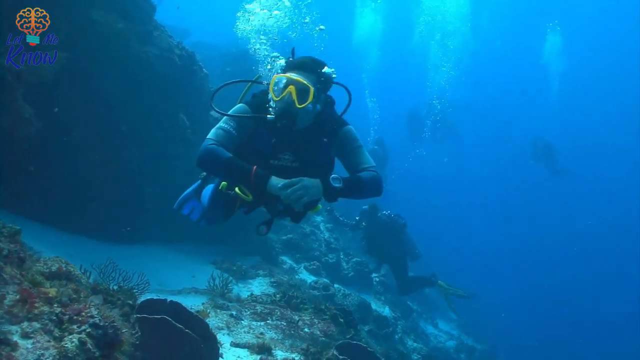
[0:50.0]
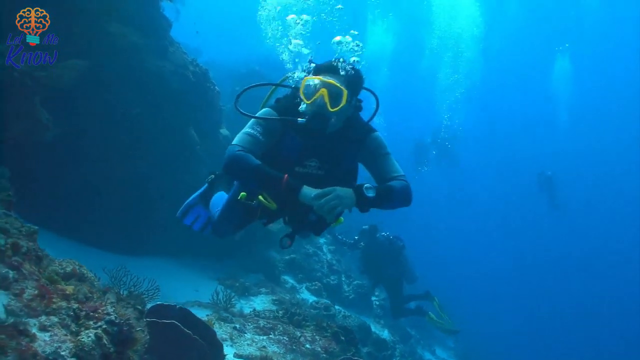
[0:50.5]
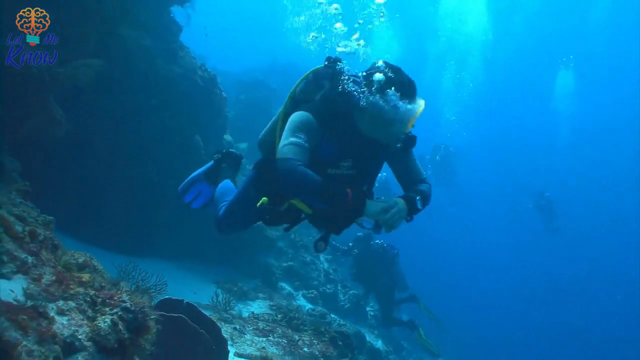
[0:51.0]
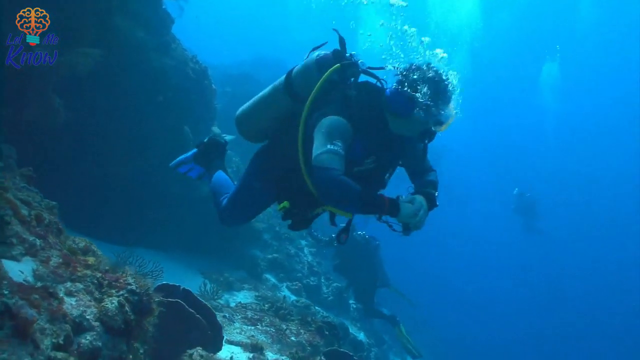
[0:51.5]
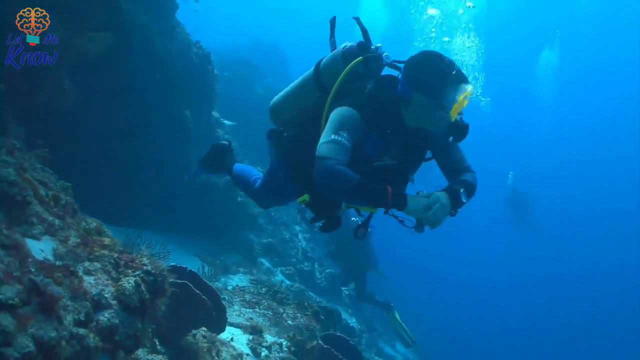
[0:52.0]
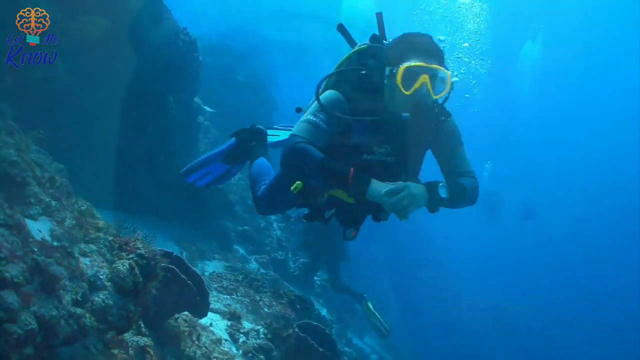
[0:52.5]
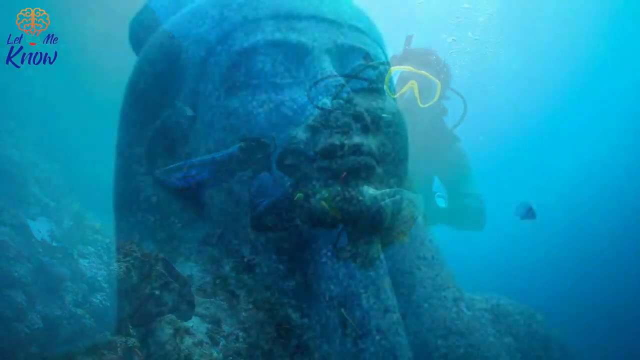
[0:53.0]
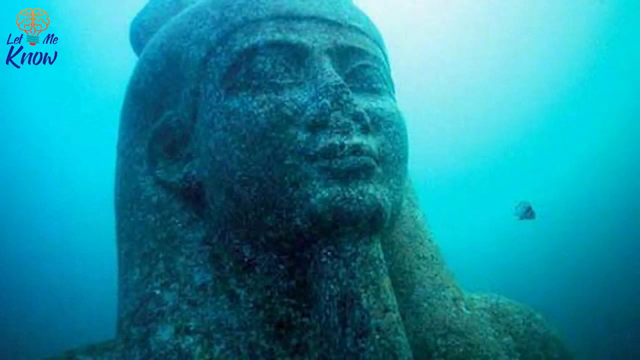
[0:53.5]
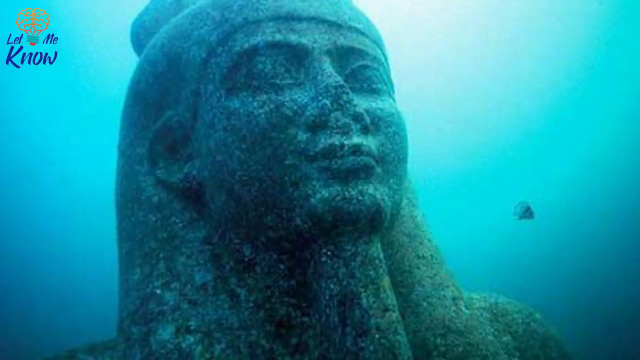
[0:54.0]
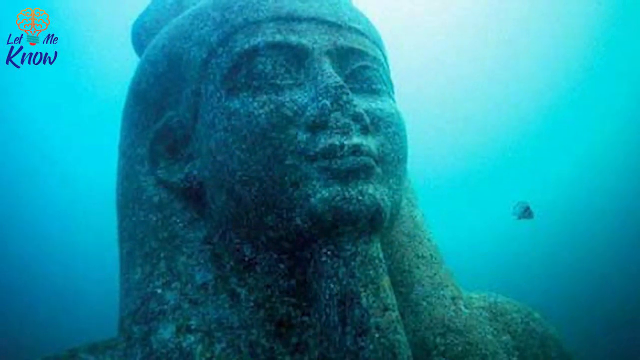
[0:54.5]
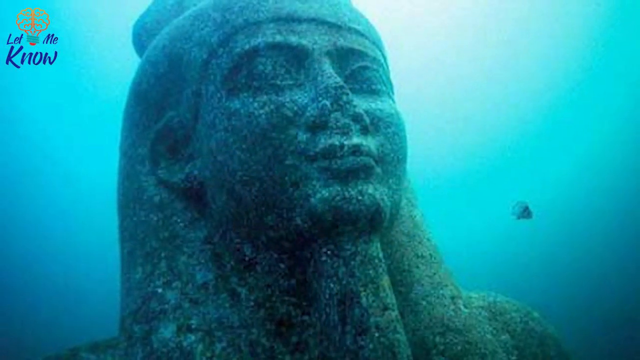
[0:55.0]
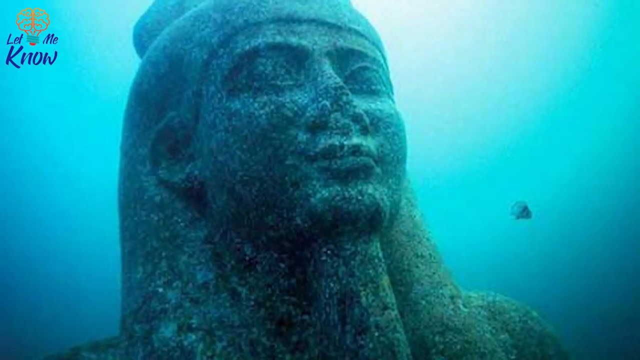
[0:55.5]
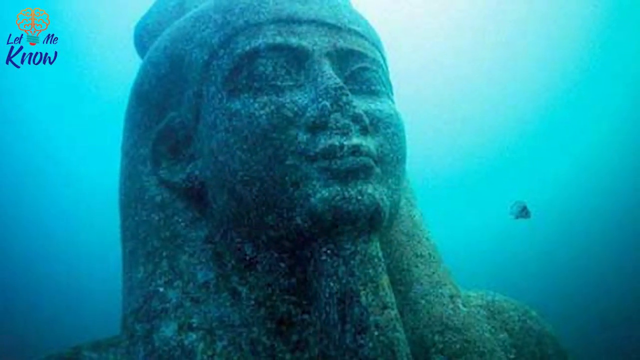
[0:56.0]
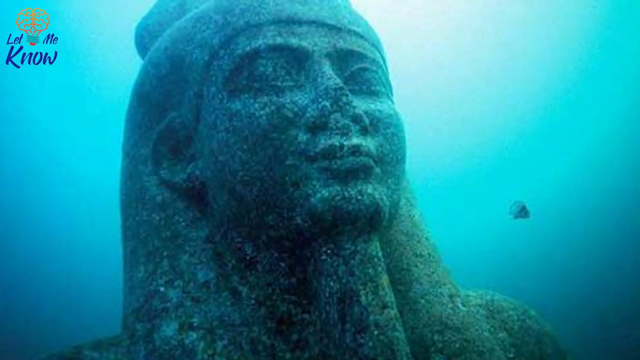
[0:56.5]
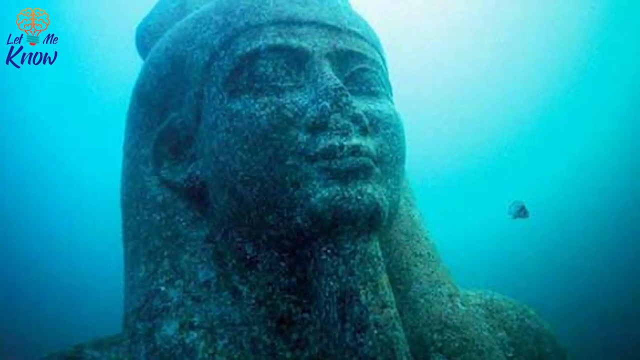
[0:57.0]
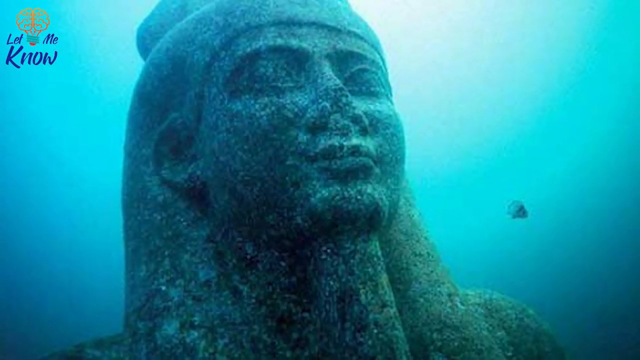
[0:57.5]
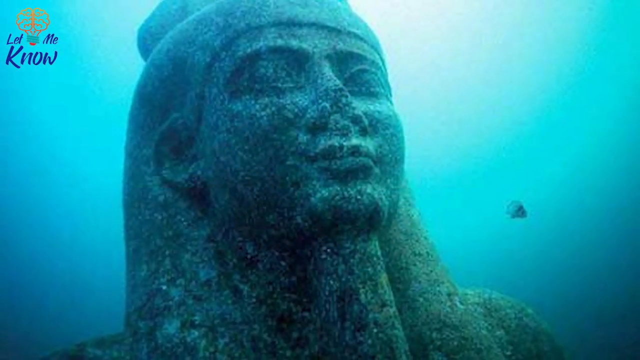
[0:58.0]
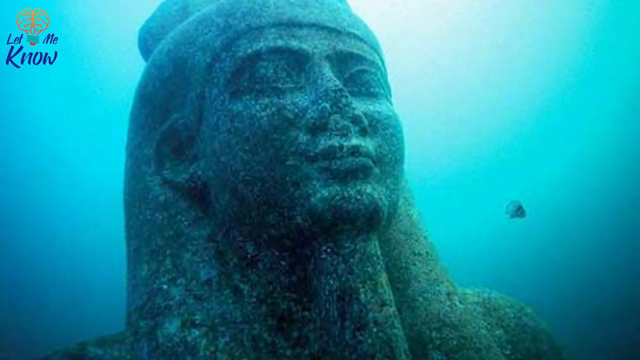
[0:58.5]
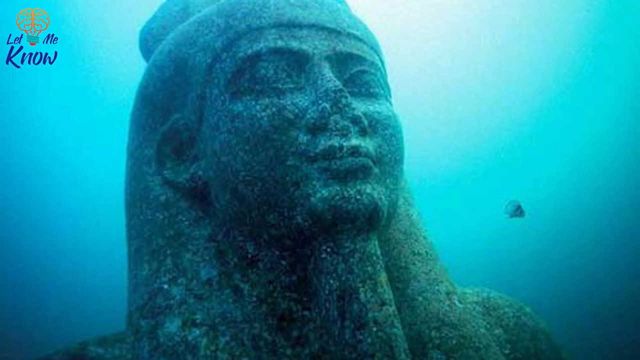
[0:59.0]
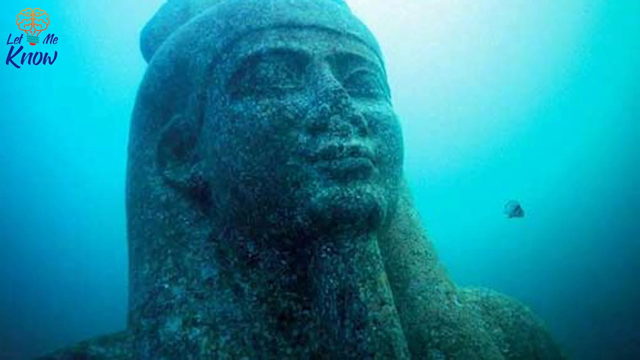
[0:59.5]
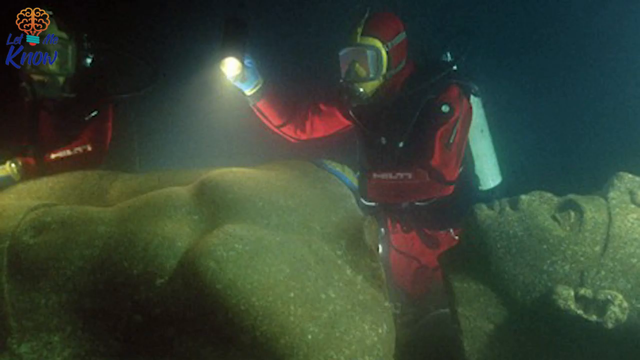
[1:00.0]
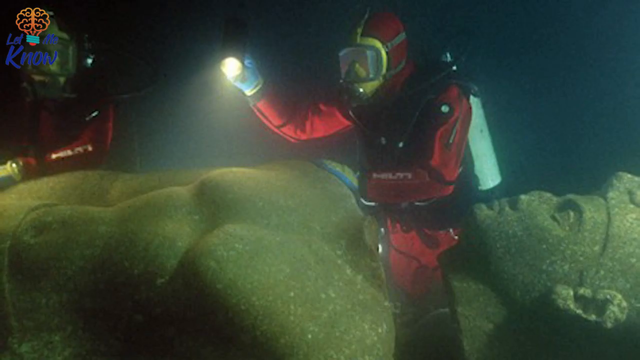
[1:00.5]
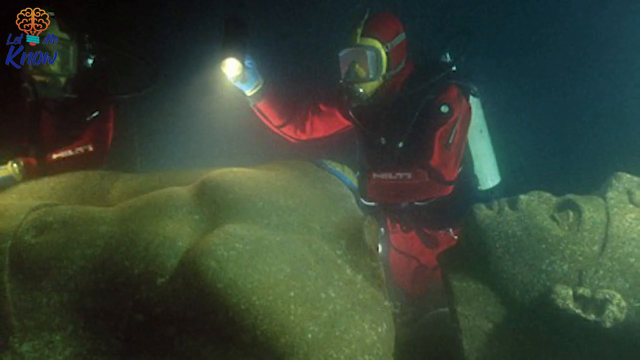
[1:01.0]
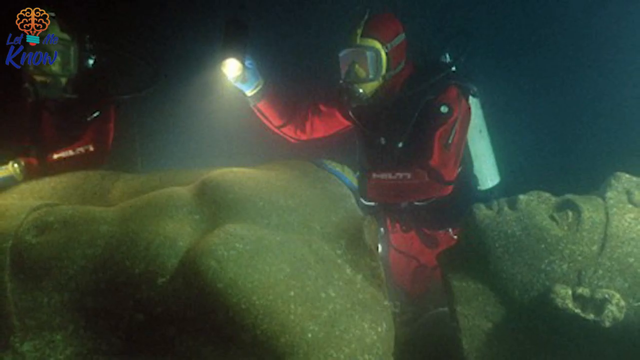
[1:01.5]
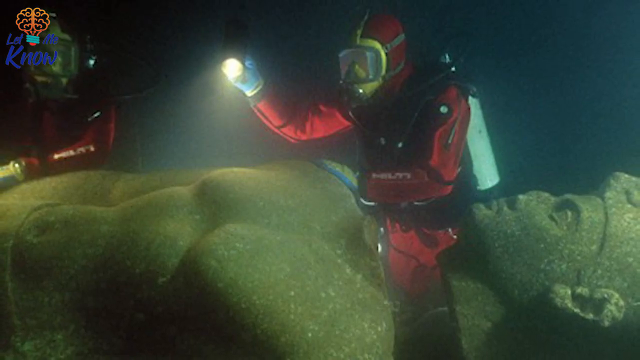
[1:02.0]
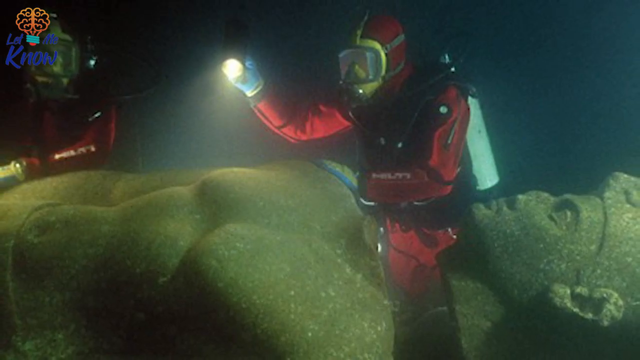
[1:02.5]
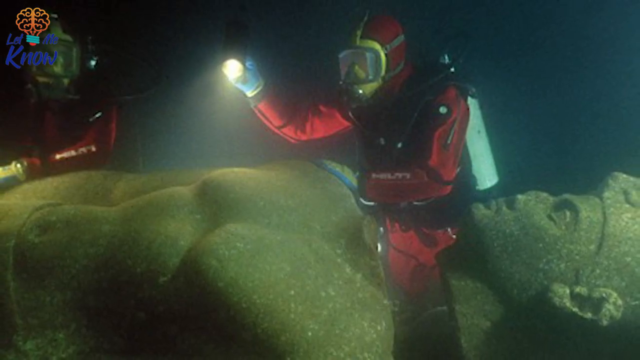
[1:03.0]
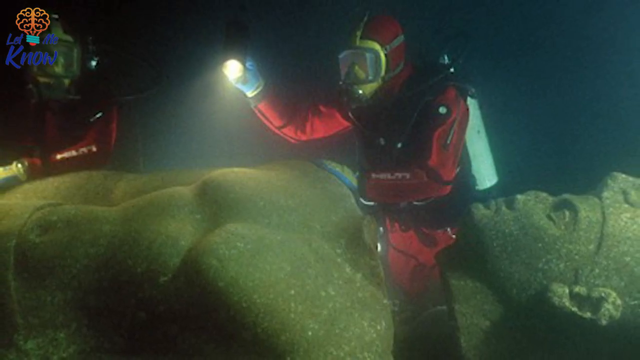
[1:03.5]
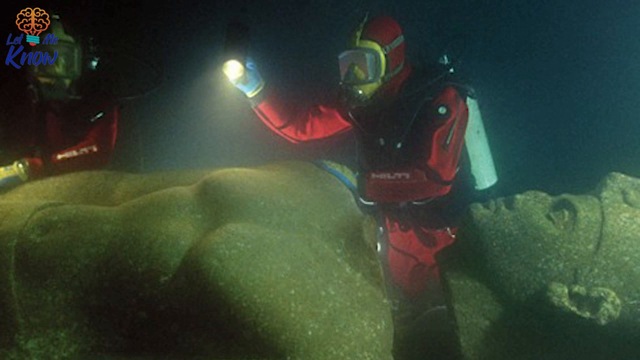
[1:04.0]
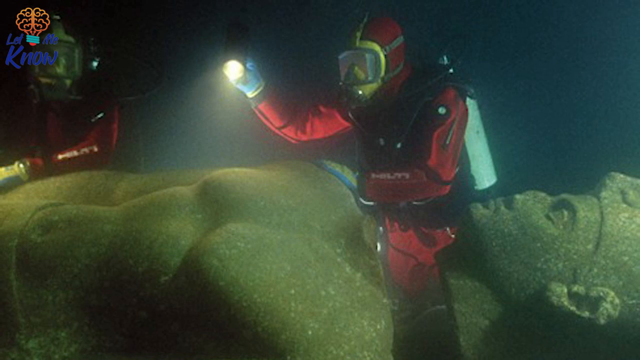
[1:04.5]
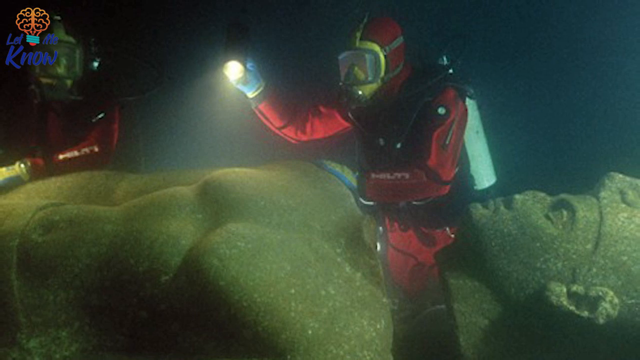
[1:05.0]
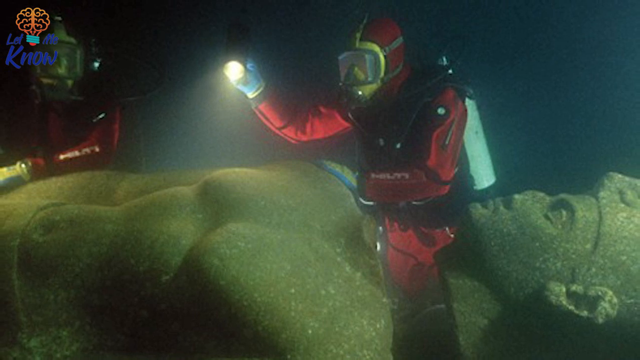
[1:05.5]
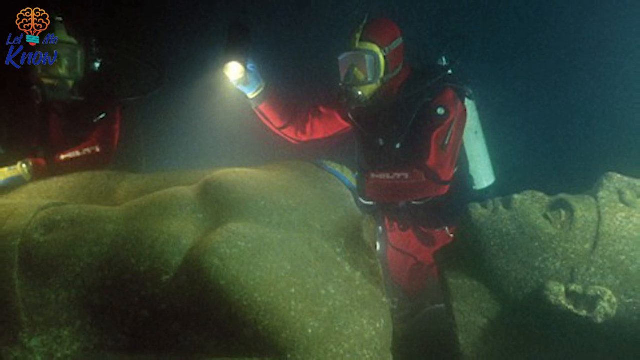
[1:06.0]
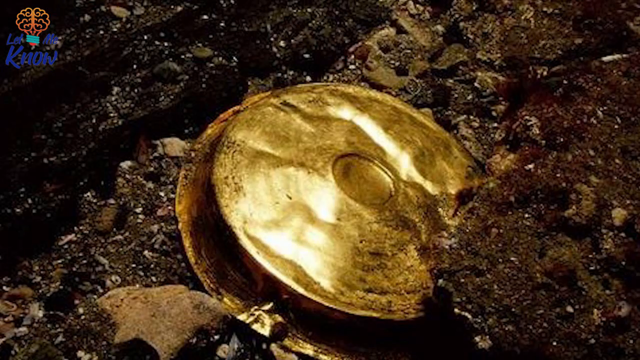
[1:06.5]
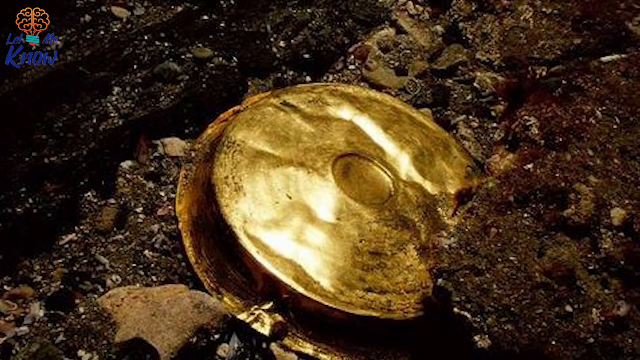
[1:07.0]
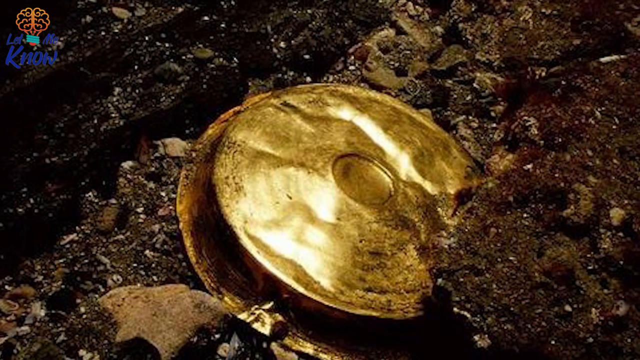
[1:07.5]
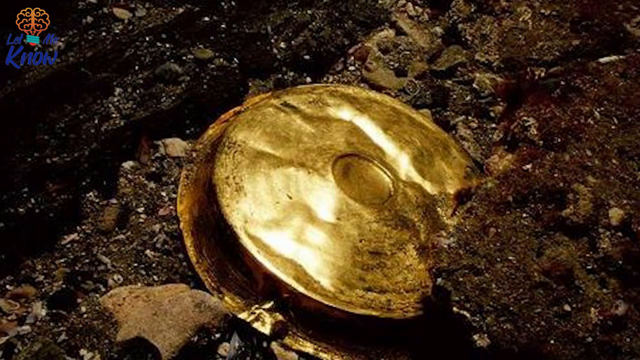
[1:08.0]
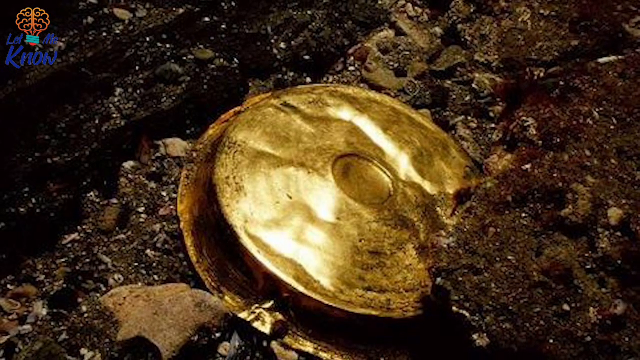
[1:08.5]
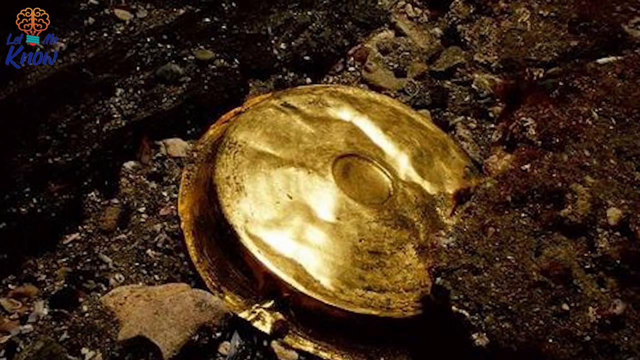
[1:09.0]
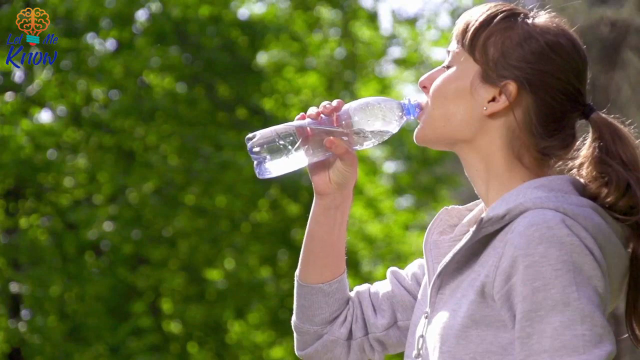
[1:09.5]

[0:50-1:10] A scuba diver looks back. A stylized image of what looks like an Egyptian statue of a deity appears in the teal-blue underwater setting, and it is then seen on the ground. The scene transitions to a scuba diver in a very dark setting with a flashlight, inspecting the statue, possibly deeper at the bottom of the sea. The statue is placed horizontally. The diver rests one hand on it and uses the other to hold a flashlight up to inspect the stone. Another scuba diver is in the background. Both wear red and have masks with a yellow tint, and a scuba tank is visible.